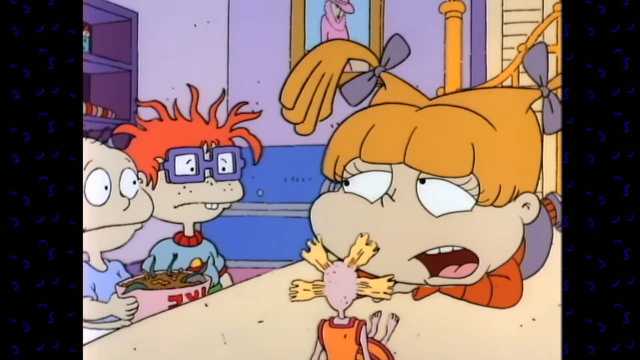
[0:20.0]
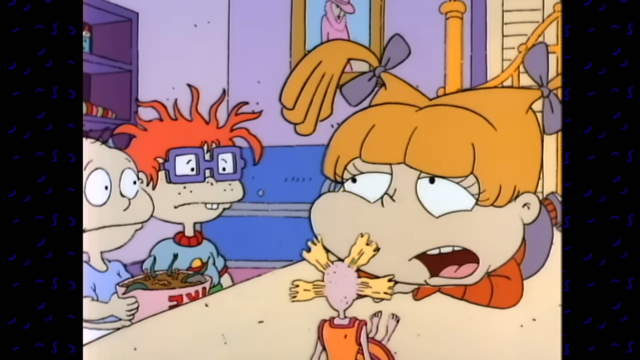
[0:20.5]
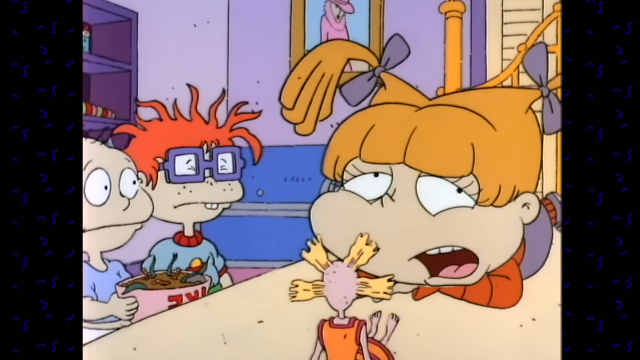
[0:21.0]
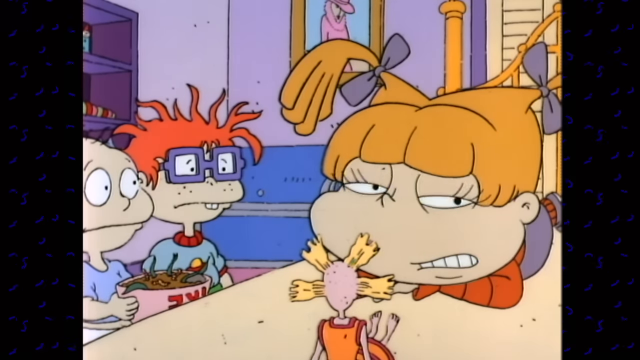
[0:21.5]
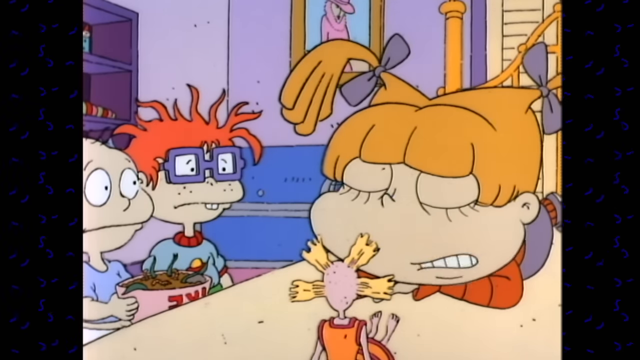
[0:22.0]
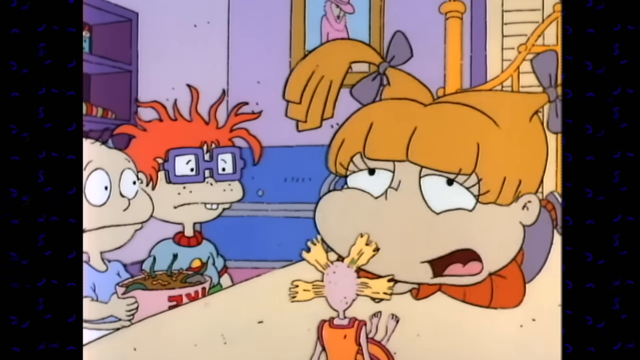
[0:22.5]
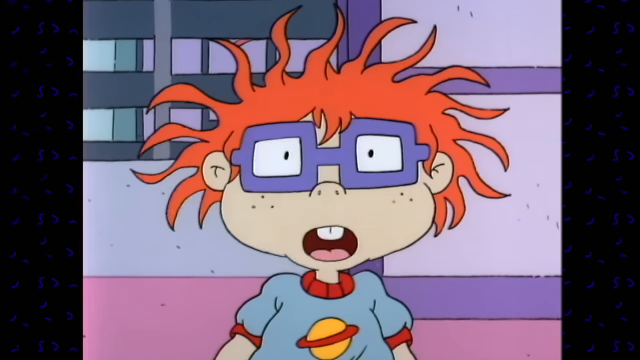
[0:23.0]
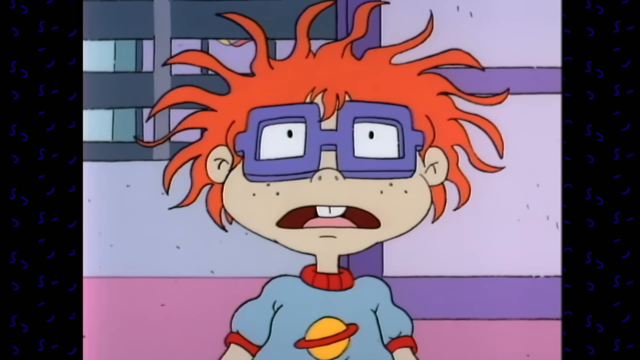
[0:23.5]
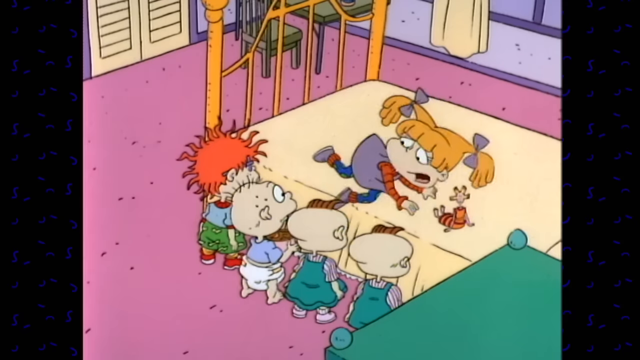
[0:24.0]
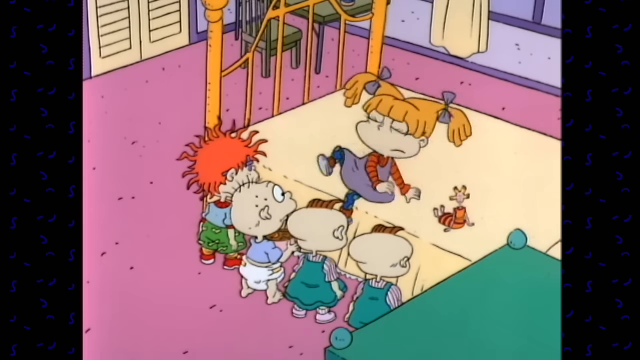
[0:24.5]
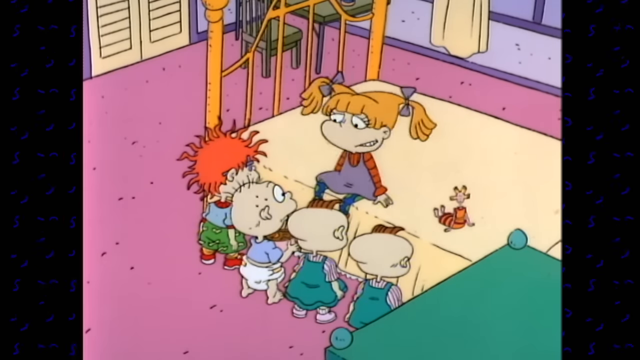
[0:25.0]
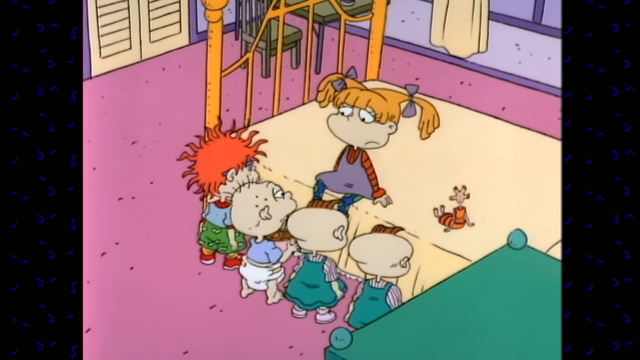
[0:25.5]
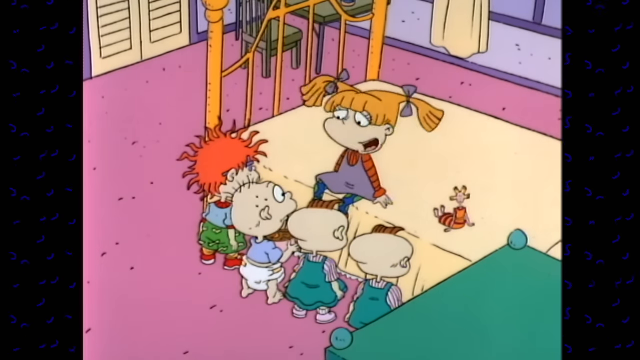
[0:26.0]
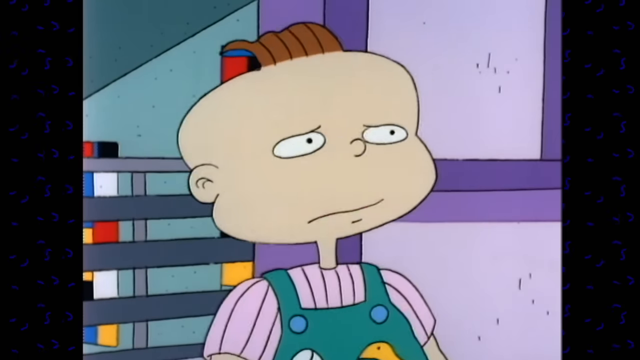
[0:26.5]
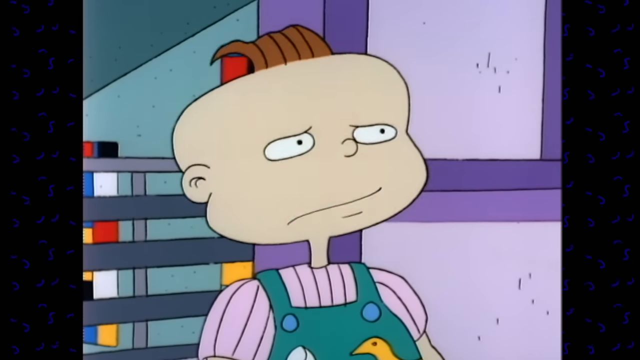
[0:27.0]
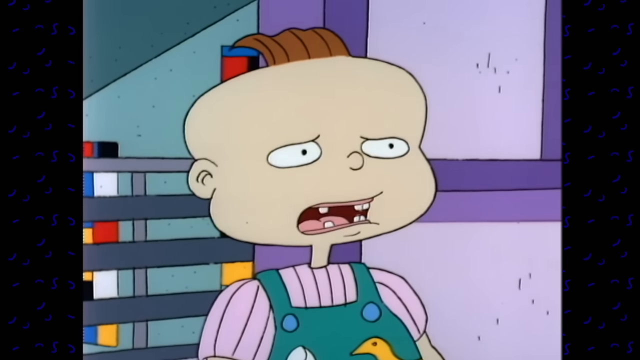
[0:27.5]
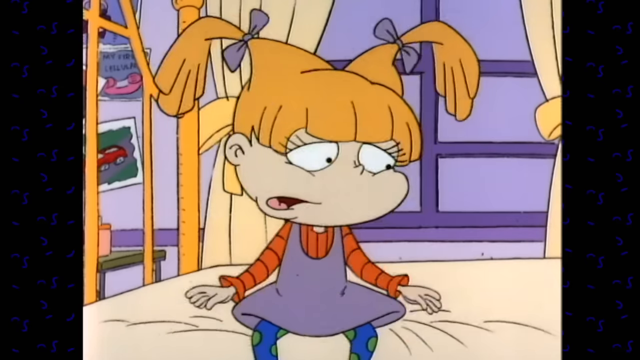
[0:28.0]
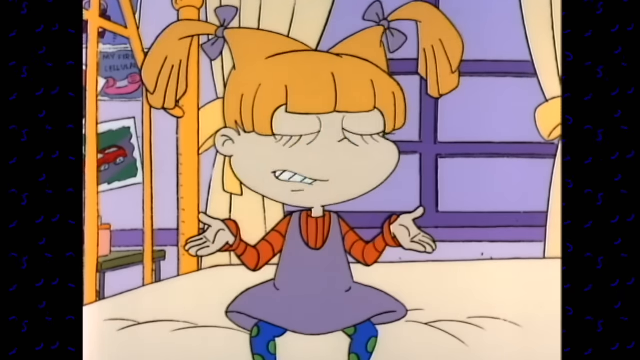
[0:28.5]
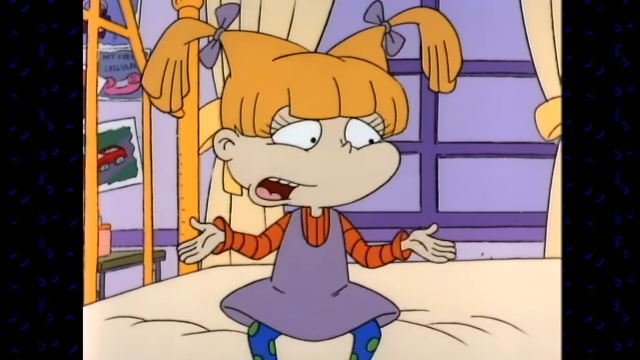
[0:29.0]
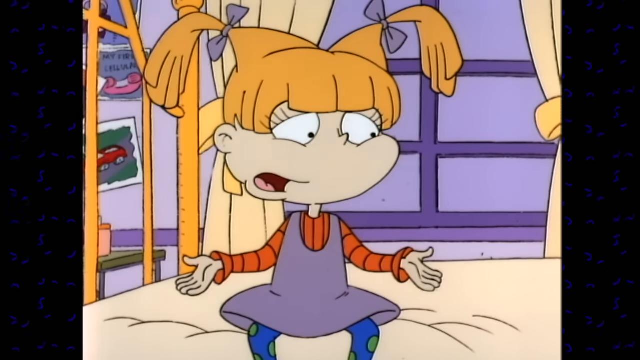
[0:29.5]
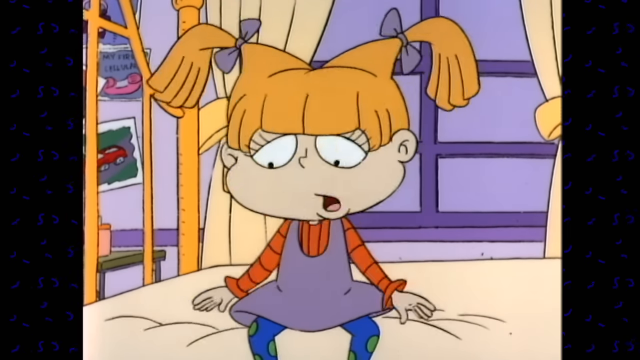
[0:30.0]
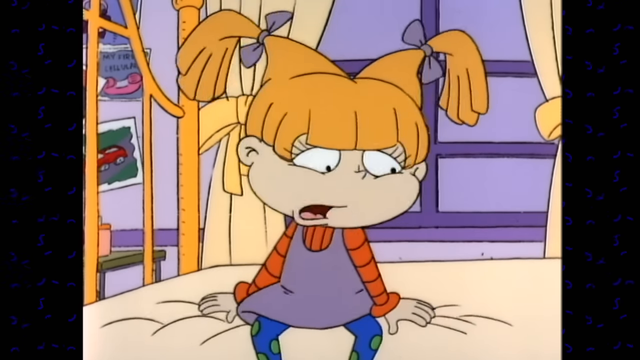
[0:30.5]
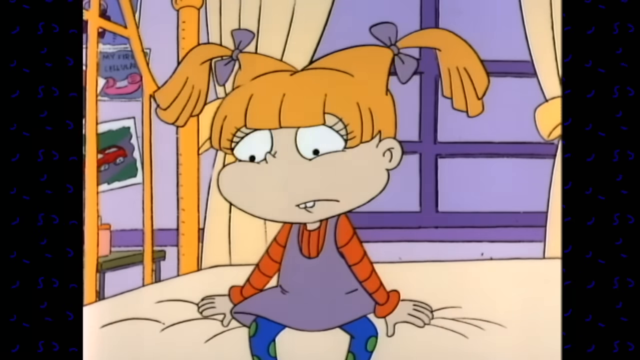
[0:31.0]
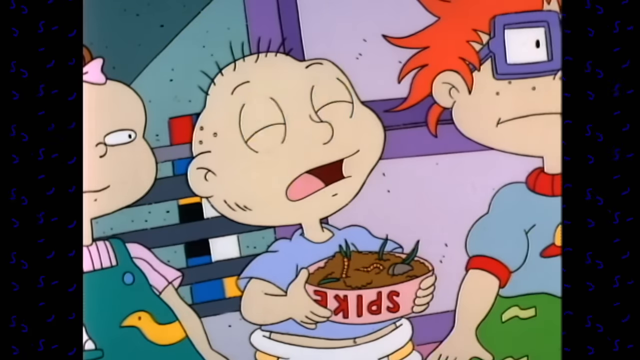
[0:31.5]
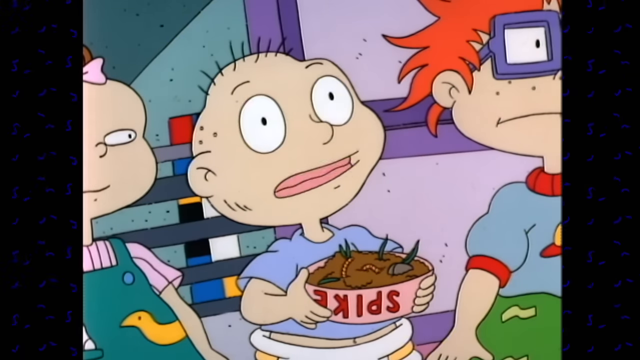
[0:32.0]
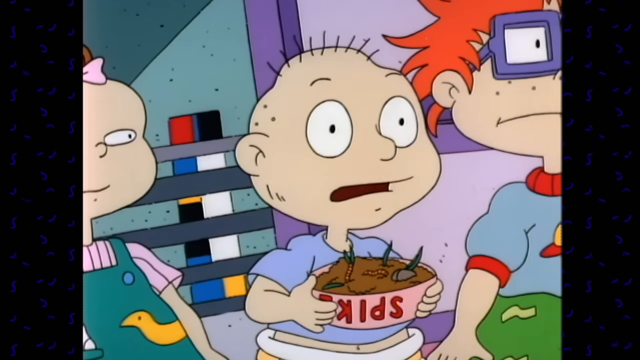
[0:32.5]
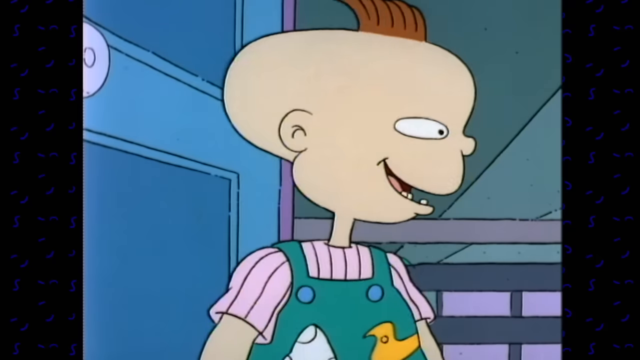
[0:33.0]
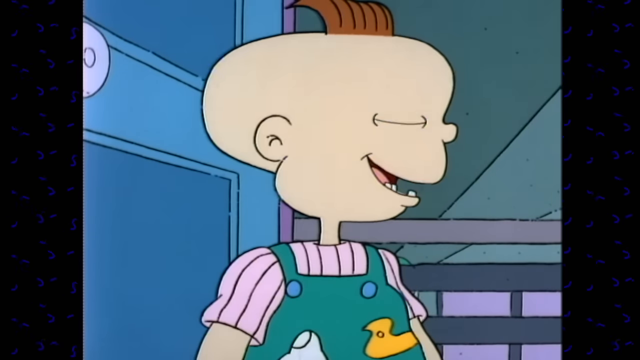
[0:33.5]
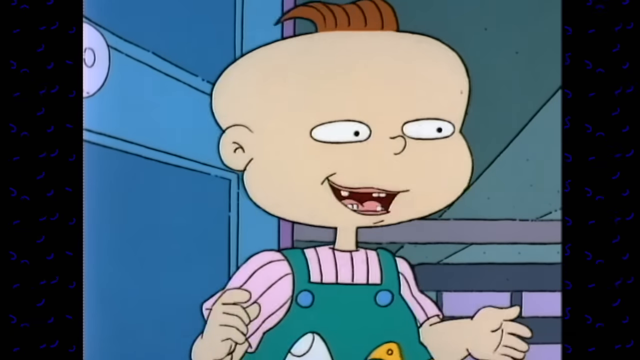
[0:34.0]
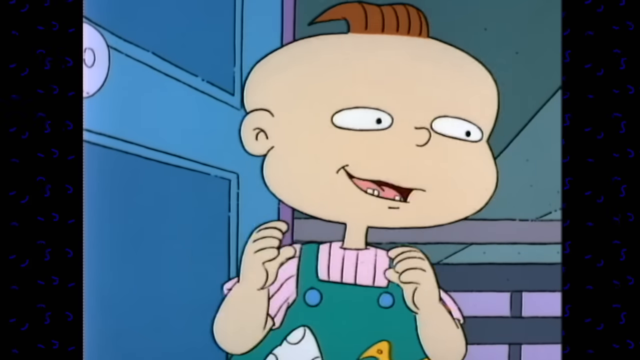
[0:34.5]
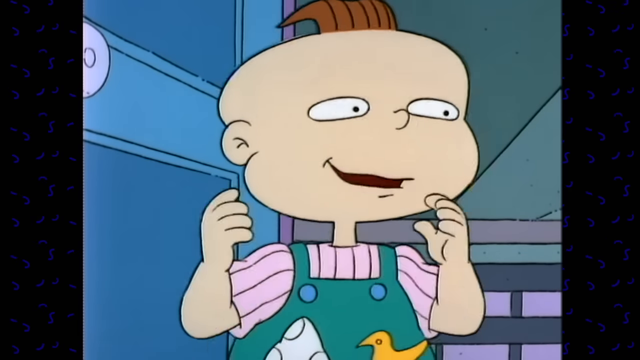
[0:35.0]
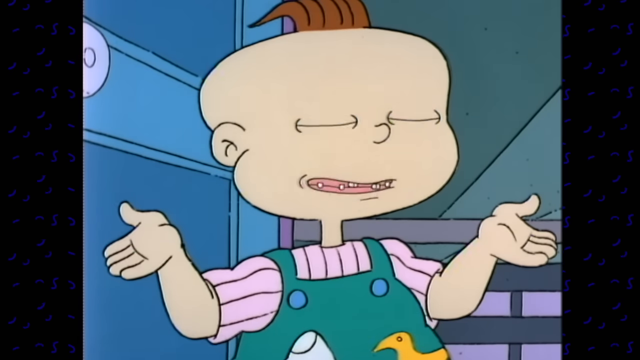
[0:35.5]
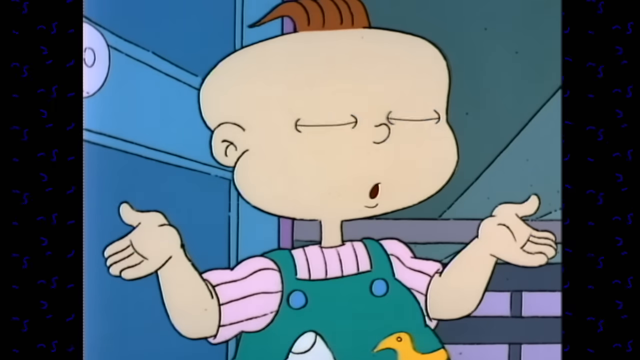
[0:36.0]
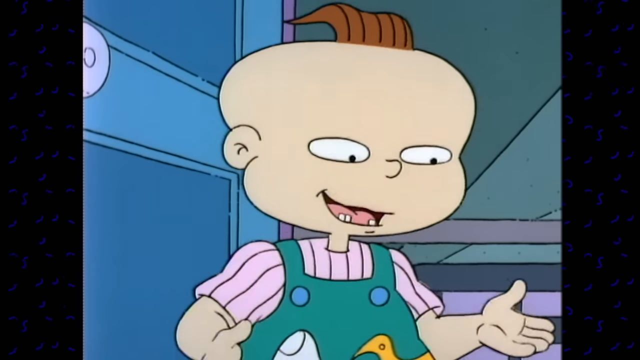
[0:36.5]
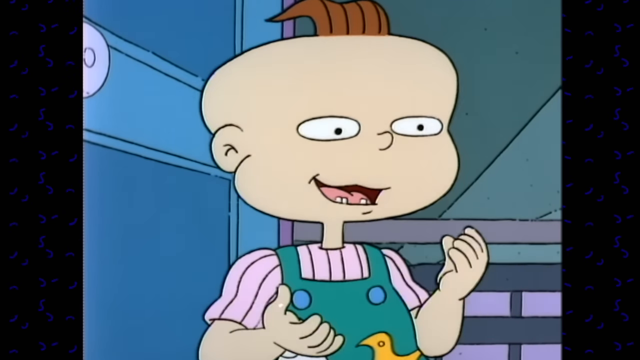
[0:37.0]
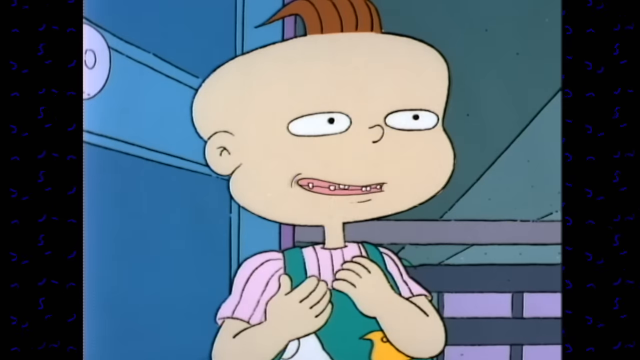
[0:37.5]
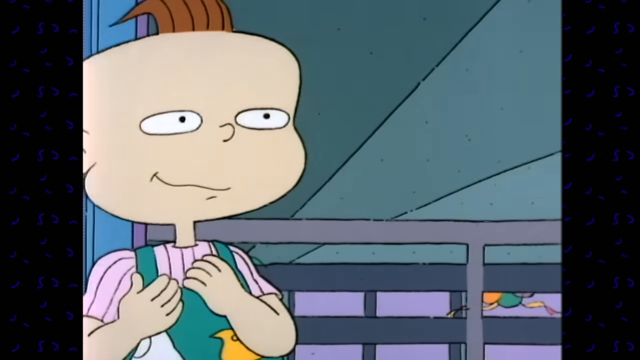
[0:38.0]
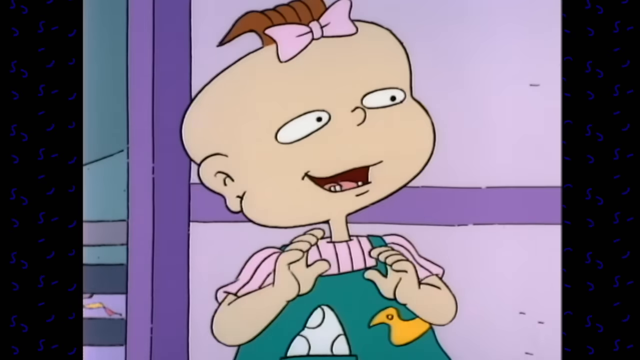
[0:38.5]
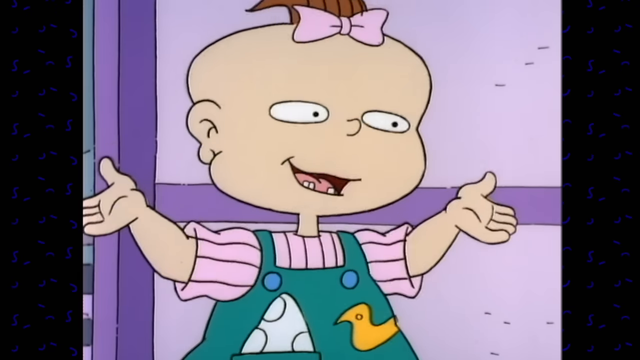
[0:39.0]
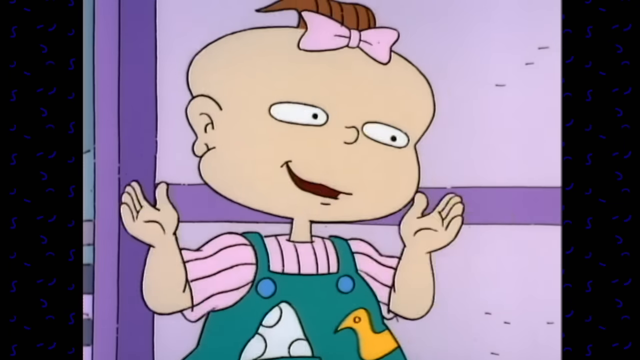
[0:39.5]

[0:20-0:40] The girl is still lying on her stomach on her bed, and as the babies talk she kind of rolls her eyes. She then shifts to sitting on her bed, facing them, and it looks like they are trying to explain things to her, each seeming to take a turn. She doesn't seem impressed by what they have. She puts her arms up, kind of holding them out, and shakes her head, and the babies then seem to try to clarify things for her. The worms and dirt are in an upside-down dog food bowl for the dog named Spike. She looks like she is trying to spend time with them but doesn't seem very interested, while the babies seem to want to spend time with her.